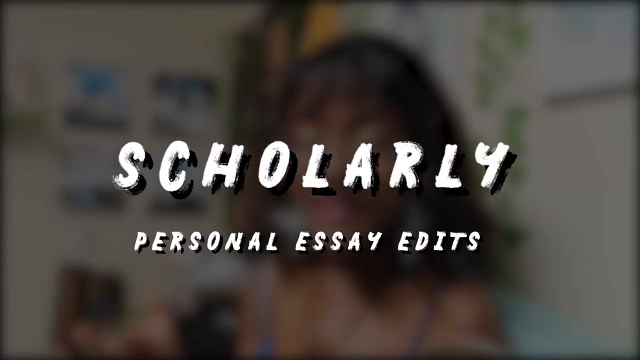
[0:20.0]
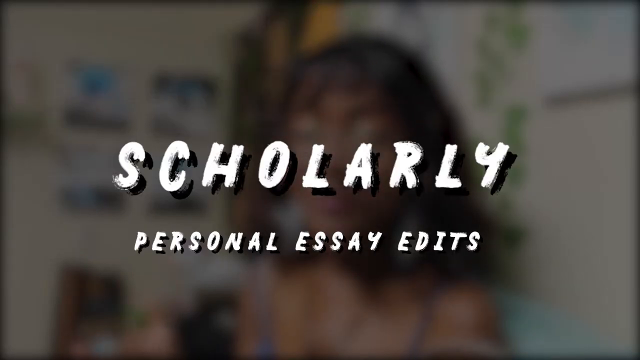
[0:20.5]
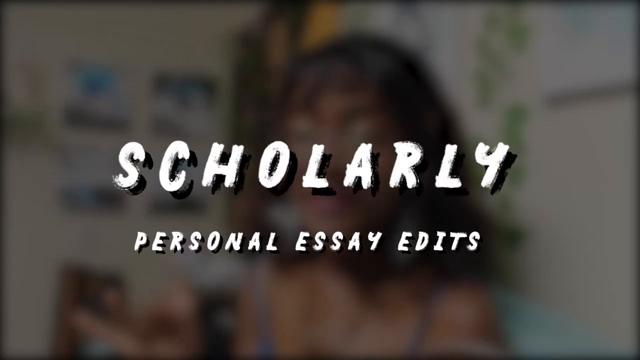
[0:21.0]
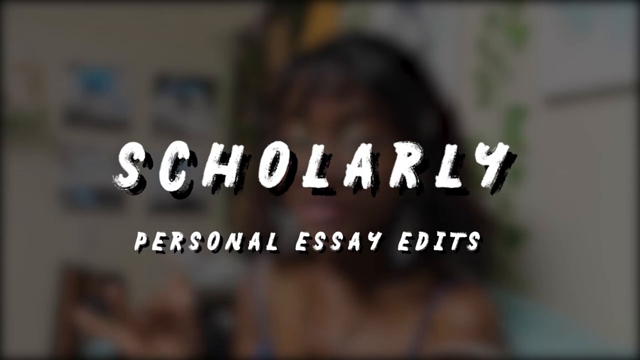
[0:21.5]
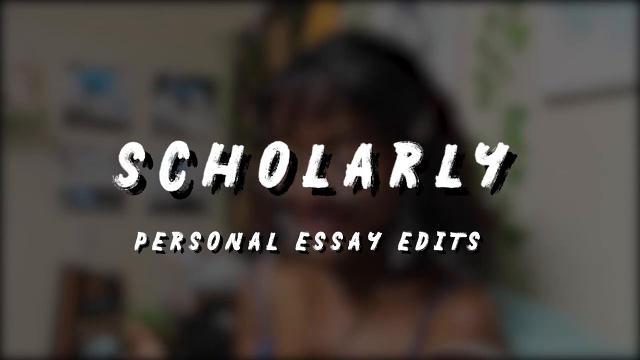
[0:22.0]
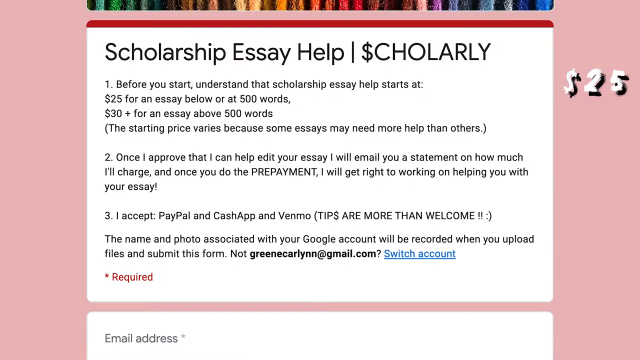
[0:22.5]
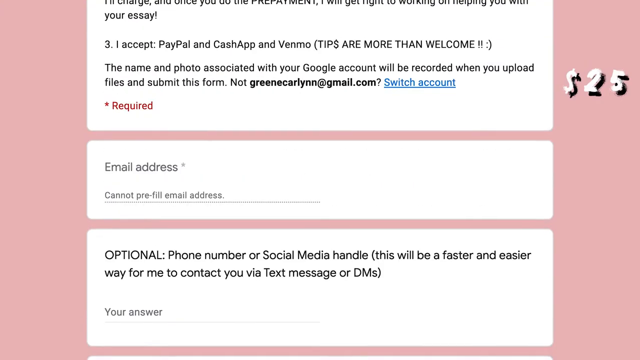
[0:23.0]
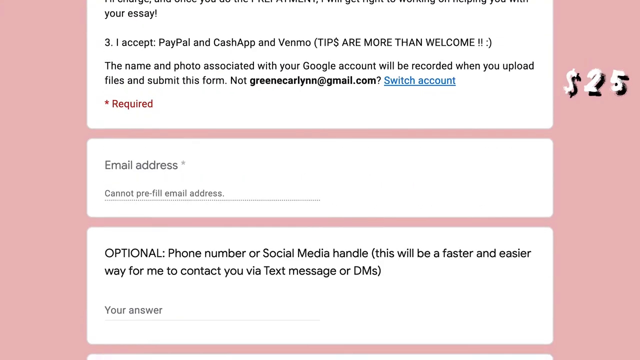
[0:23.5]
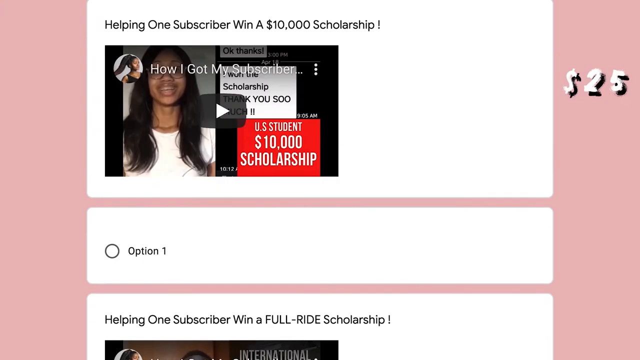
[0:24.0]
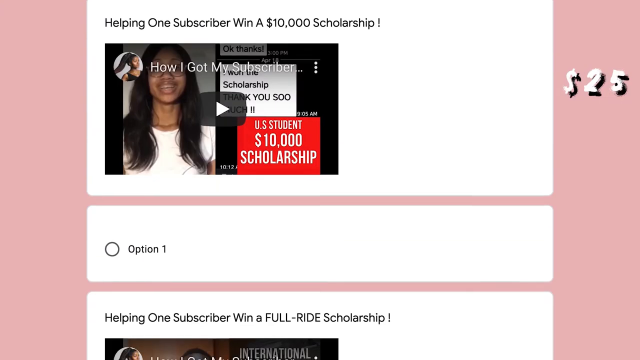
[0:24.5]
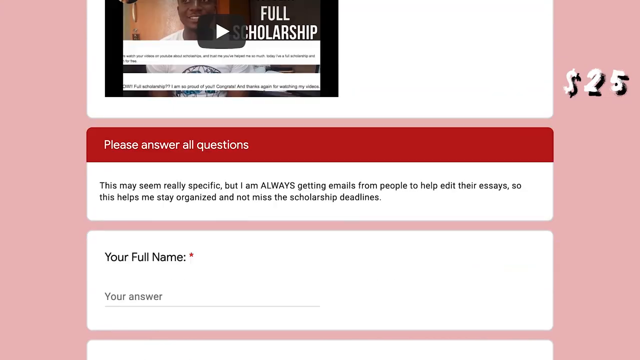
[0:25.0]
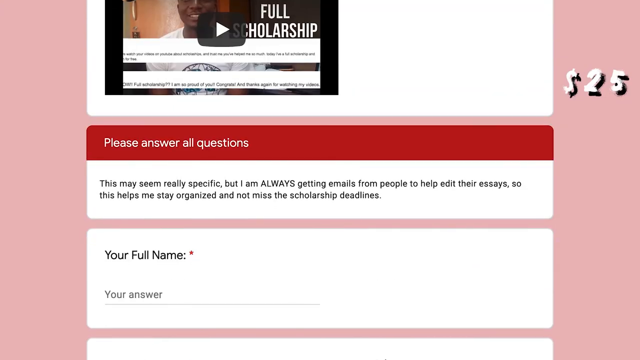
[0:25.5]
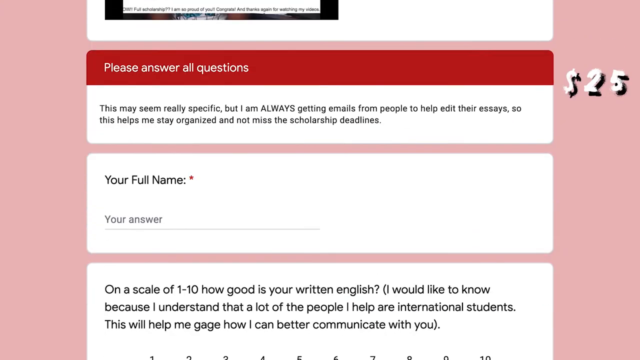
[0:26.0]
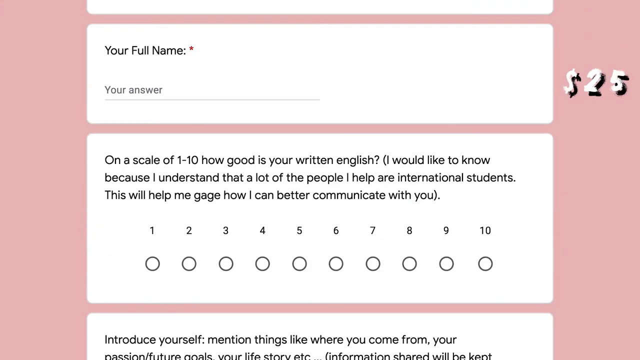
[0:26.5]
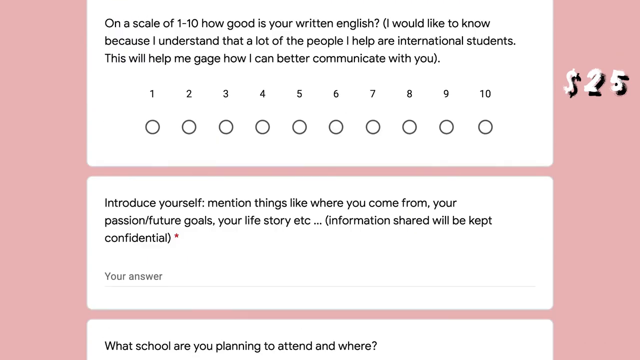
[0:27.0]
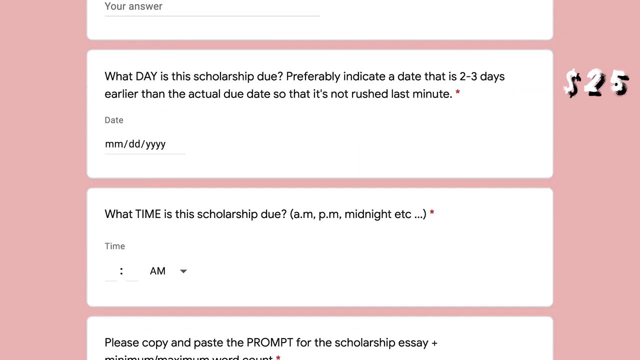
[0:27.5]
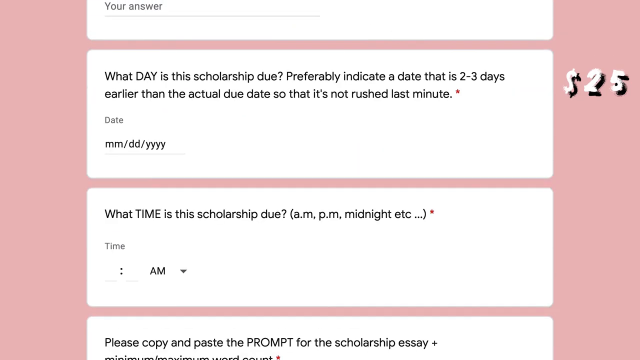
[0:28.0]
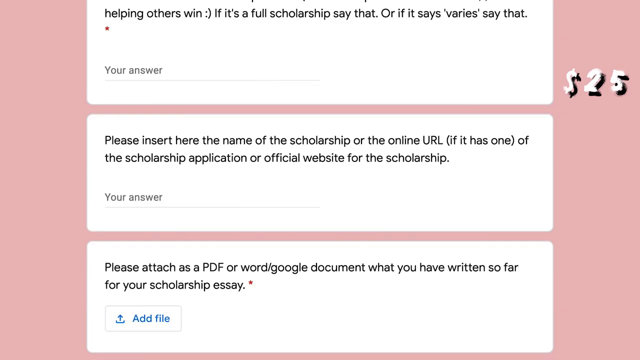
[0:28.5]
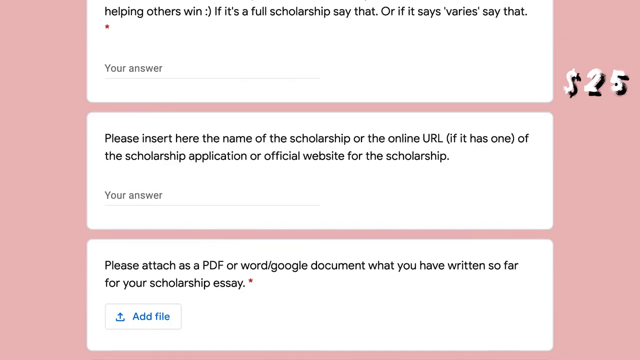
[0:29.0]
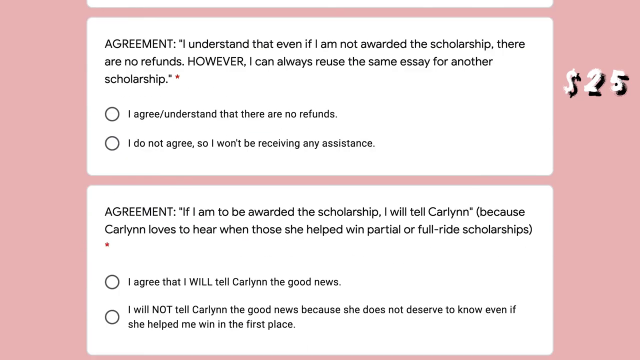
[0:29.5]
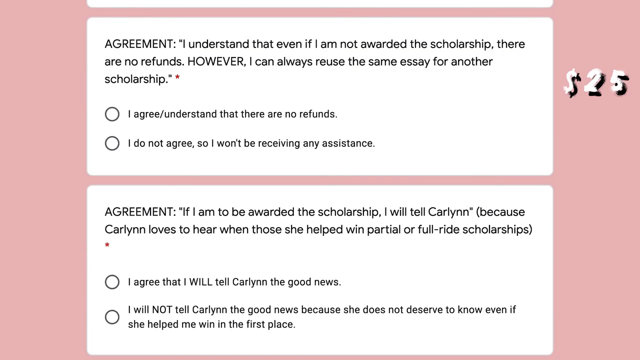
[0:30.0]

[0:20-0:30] A PDF form is shown about how to write a scholarship form and how to gain a scholarship, showing how to fill in a scholarship form and what information is needed to access the scholarship. It asks for name, surname, full name, age, what the person does, the type of education the scholarship will be used for, and plans after school. It also presents other financial platforms for students who are financially burdened and thinking about how to pay their fees and go through school.